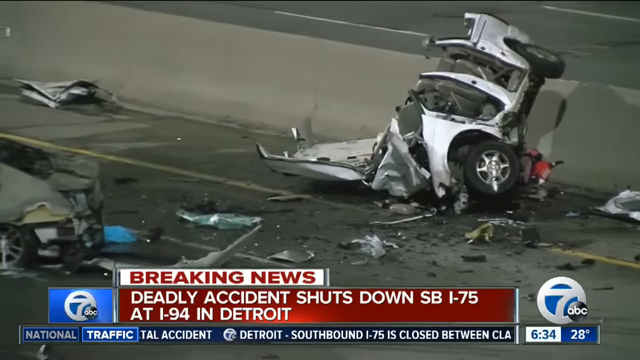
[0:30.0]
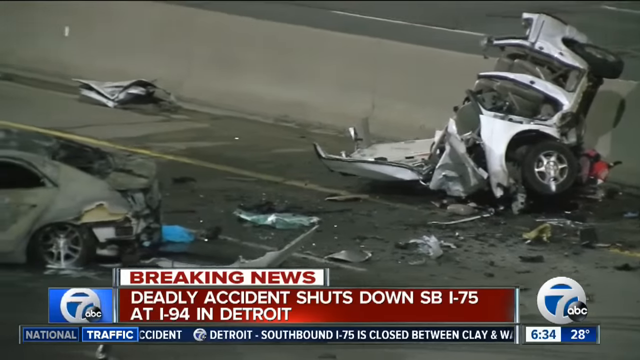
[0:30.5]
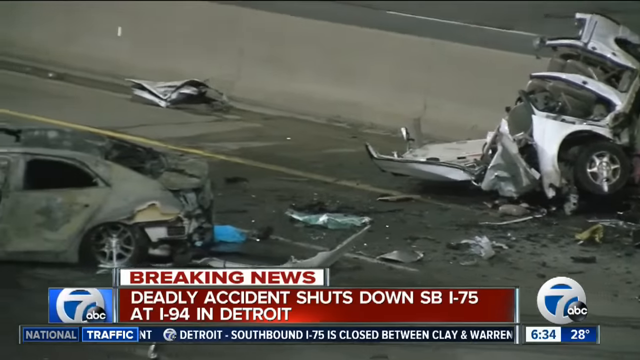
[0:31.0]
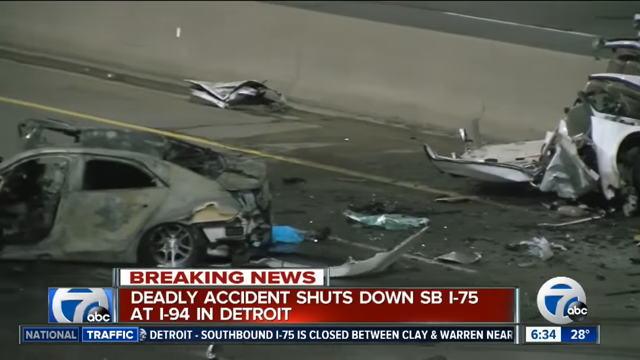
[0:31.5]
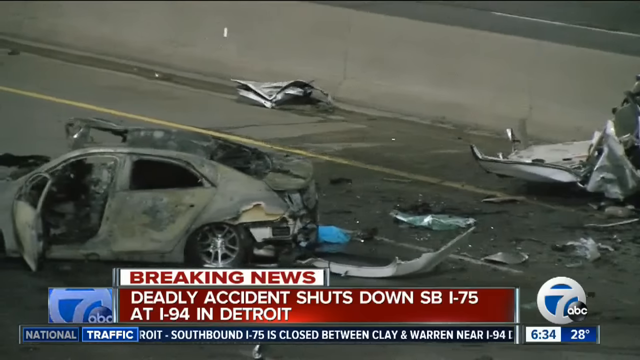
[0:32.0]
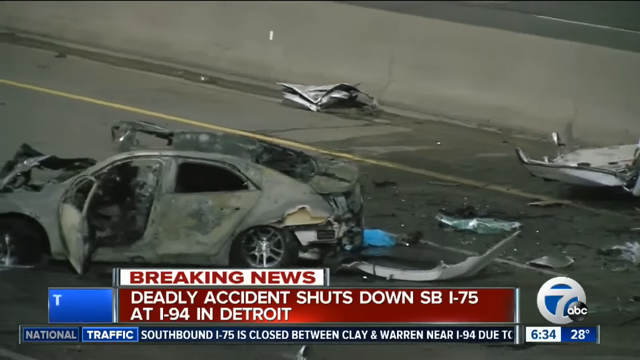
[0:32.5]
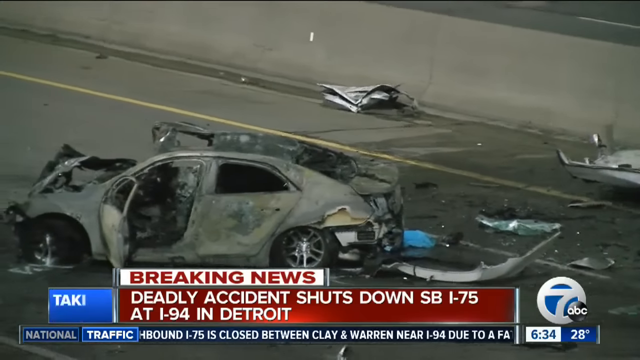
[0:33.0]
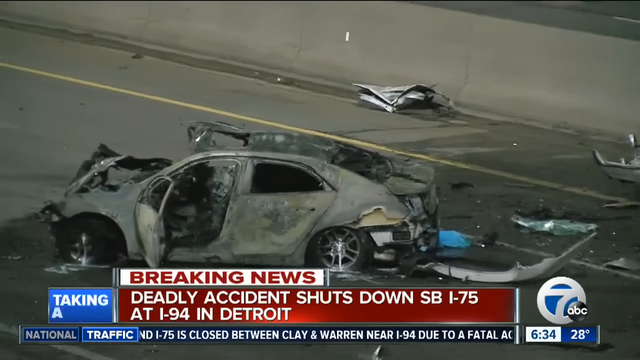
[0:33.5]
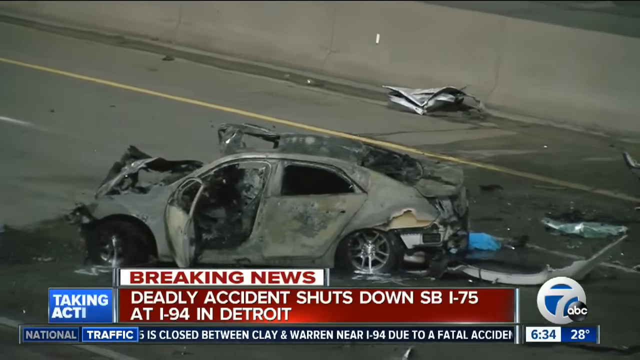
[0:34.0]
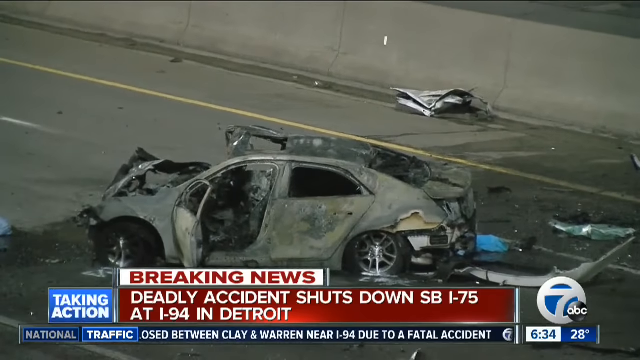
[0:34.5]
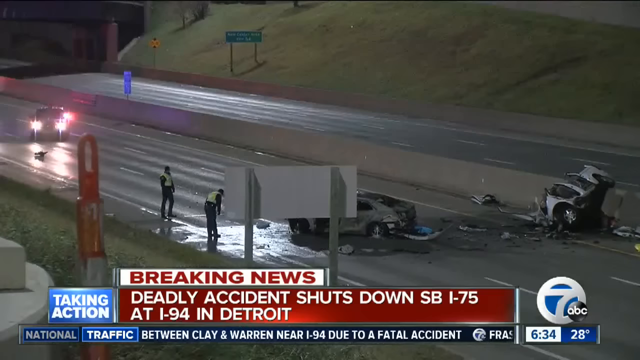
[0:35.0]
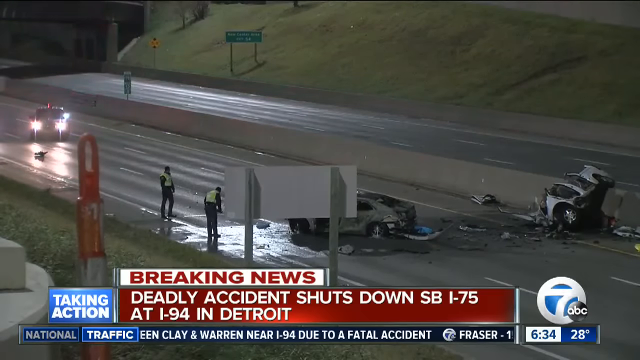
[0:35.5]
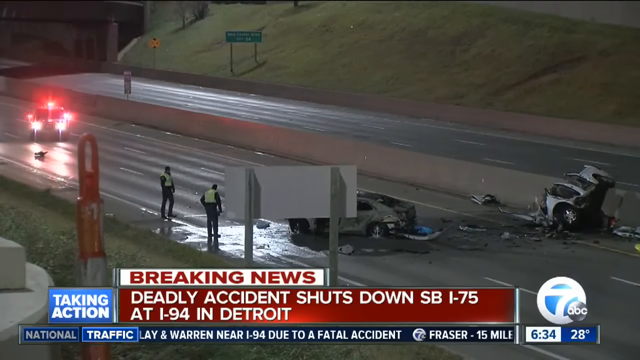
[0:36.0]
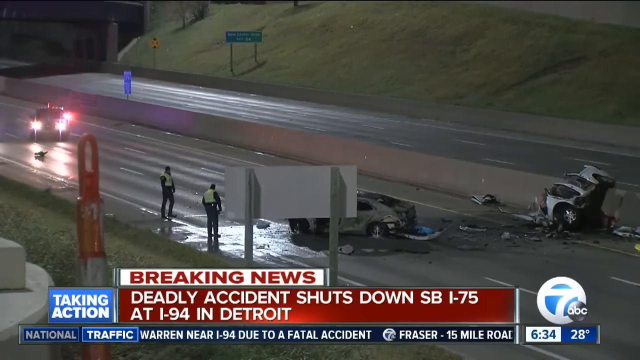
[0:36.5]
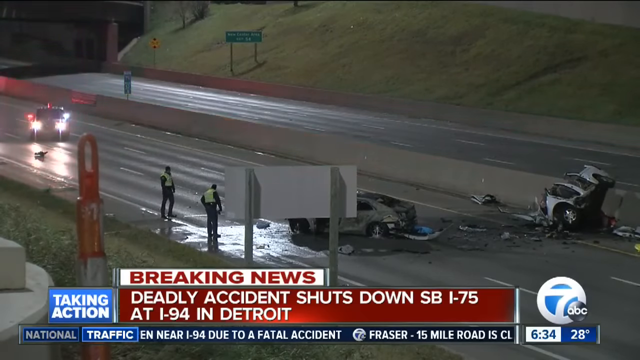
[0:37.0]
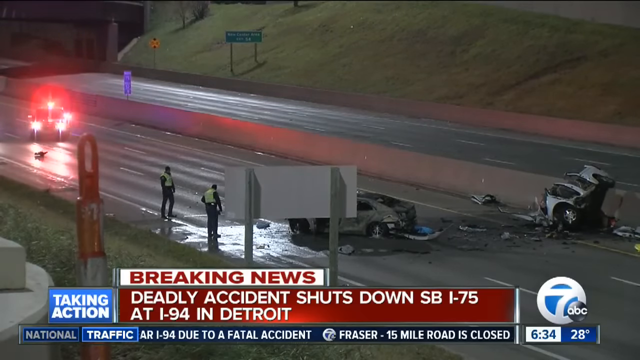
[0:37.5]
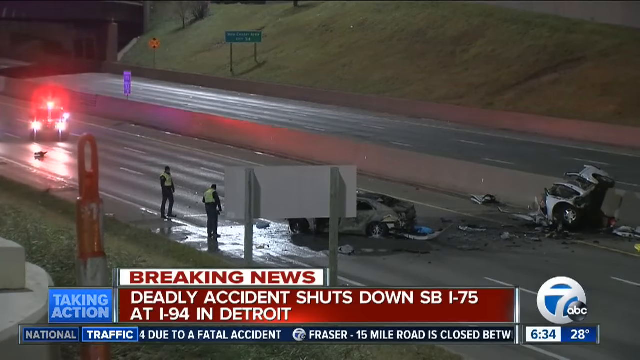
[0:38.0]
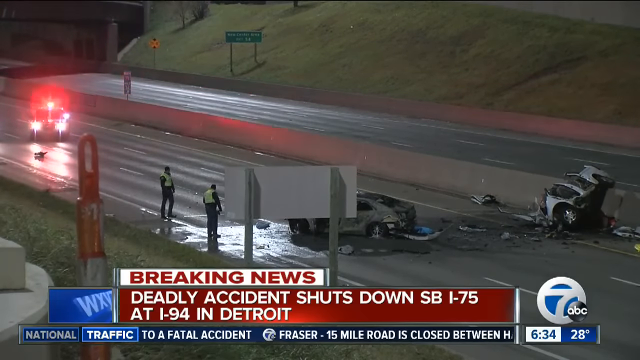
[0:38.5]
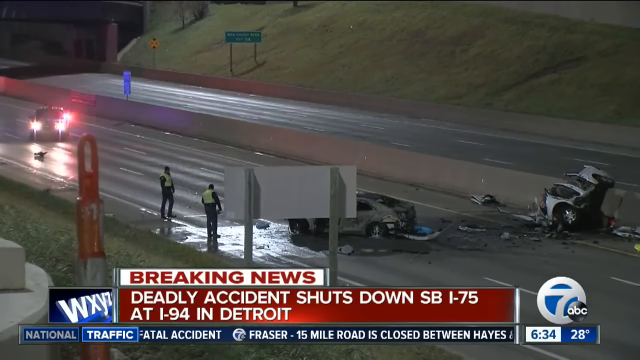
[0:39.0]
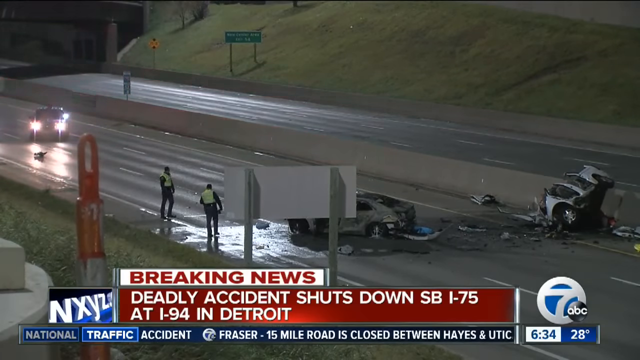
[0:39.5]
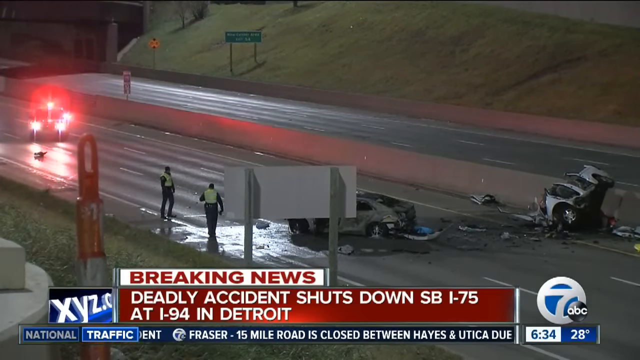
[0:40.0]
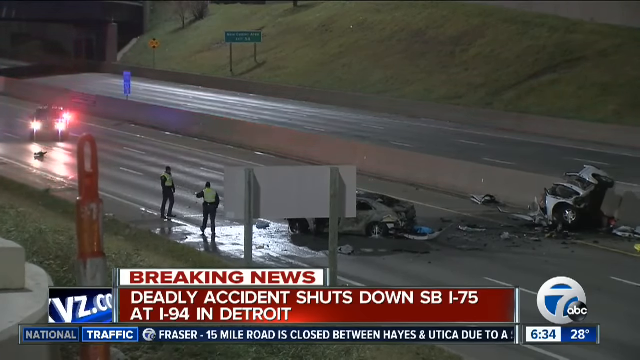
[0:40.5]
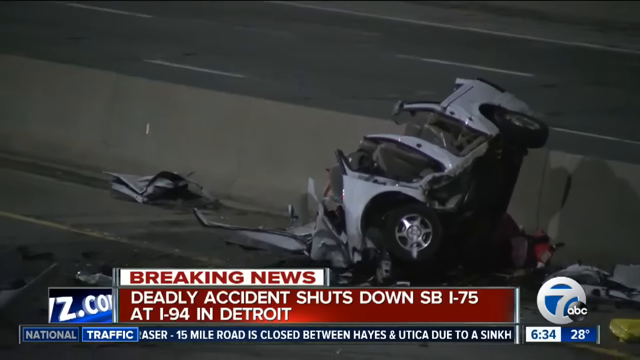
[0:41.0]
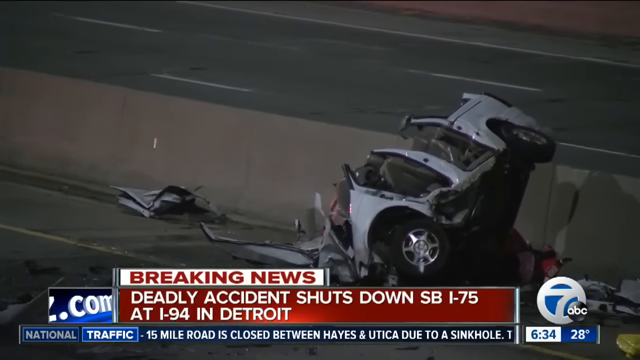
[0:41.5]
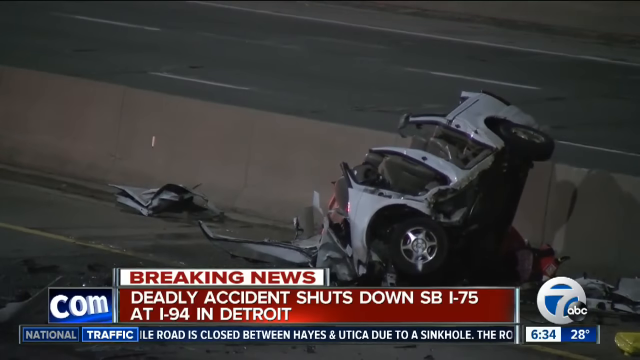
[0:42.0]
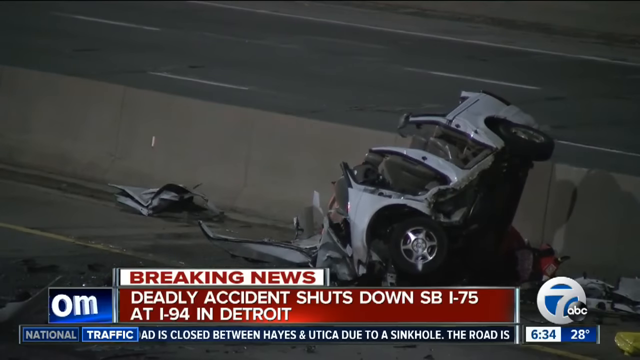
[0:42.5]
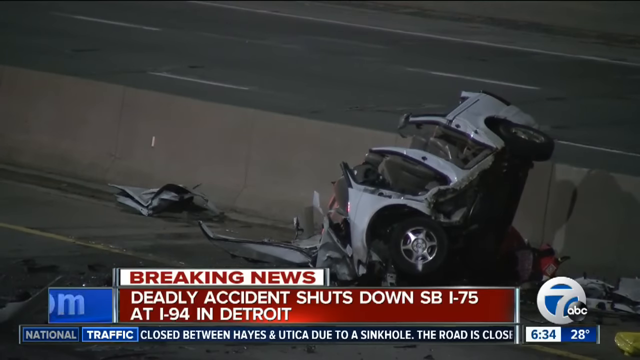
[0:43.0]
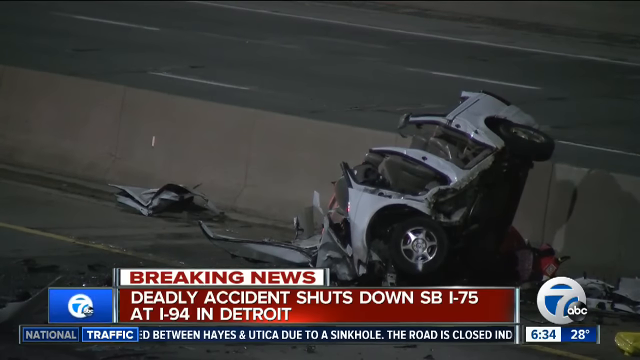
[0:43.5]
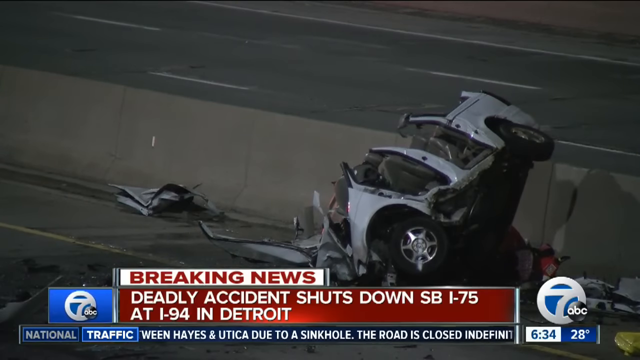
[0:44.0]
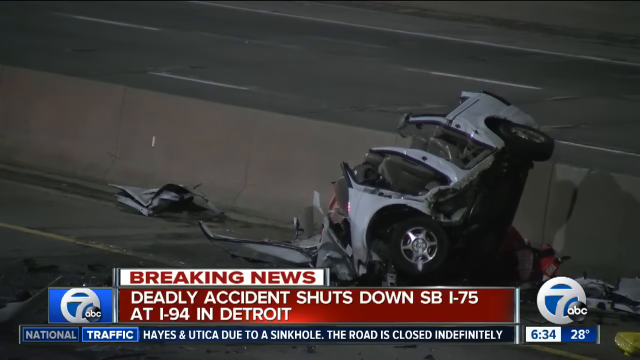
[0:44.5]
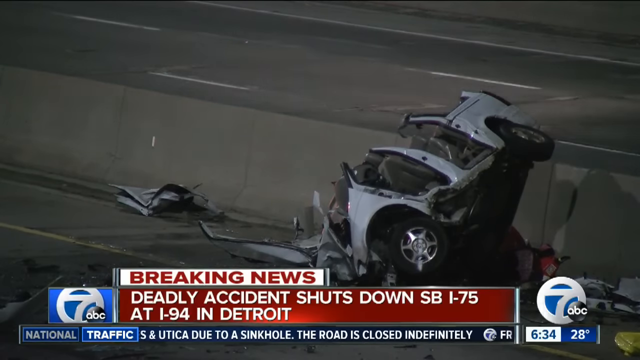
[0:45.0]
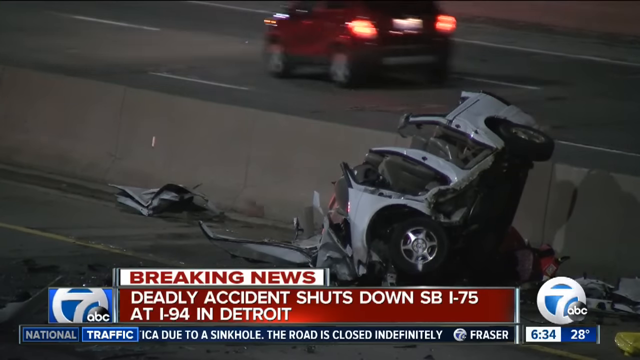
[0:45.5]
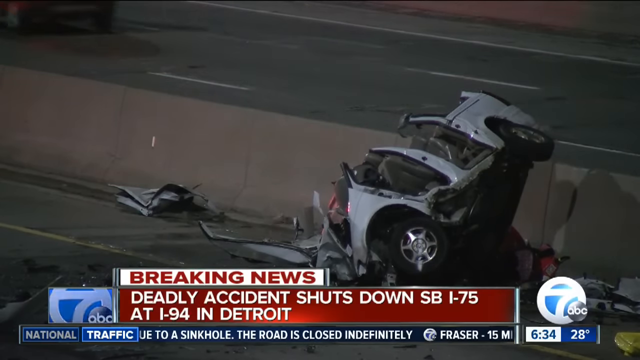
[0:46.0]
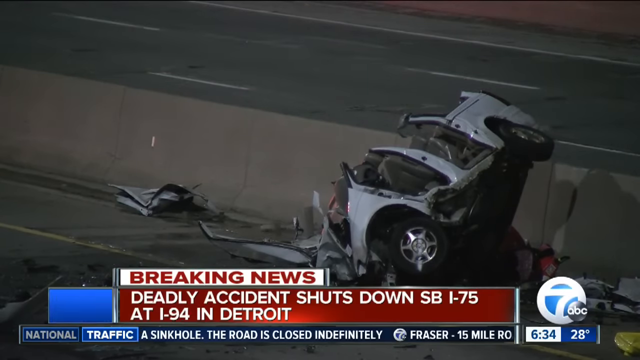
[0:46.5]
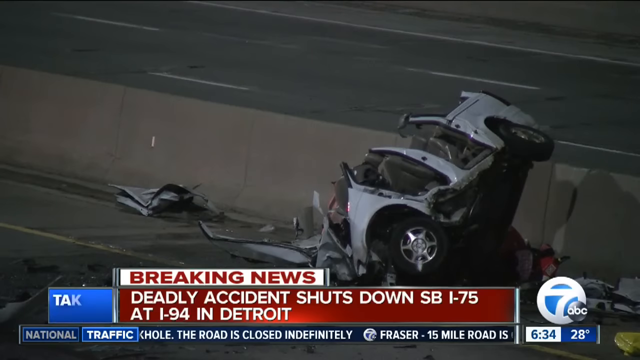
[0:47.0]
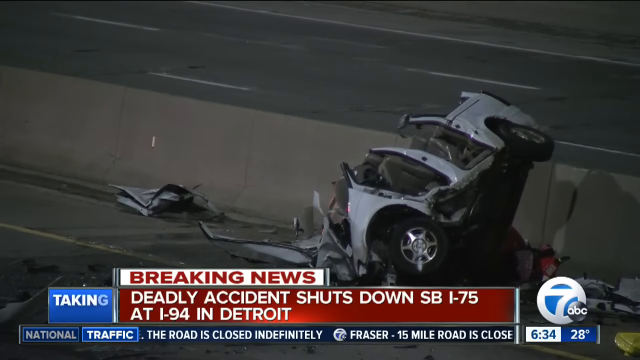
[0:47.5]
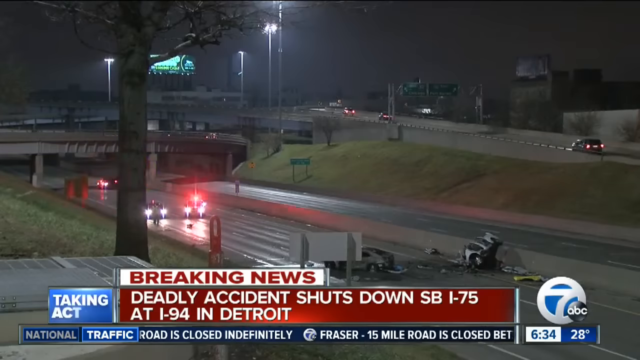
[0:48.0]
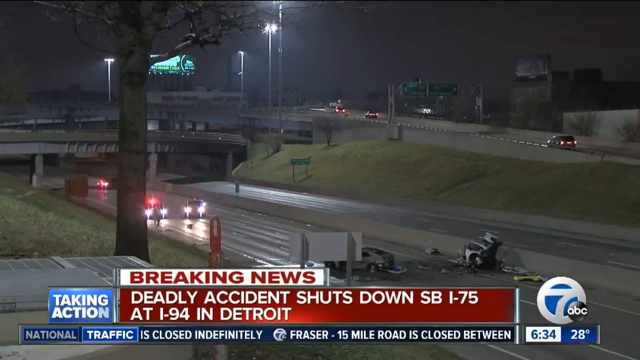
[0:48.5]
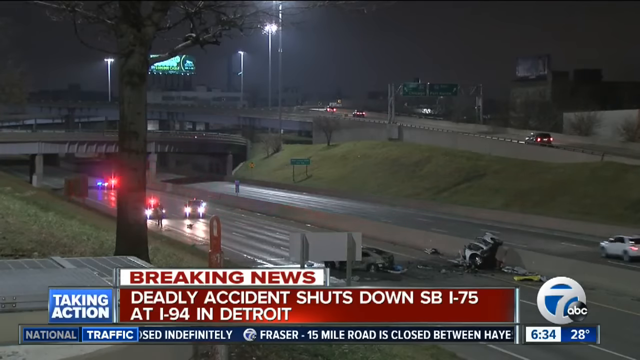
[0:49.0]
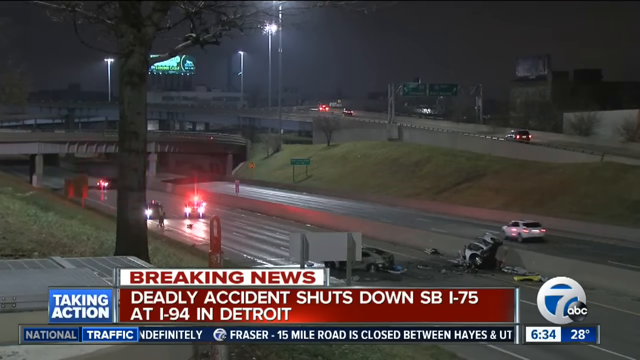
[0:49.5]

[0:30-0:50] Pictures of the car involved in the accident are shown; its parts are broken into pieces and it seems to be burned. Two people wearing green bibs look at the spot where the accident happened. A police car has come to investigate. One car flashes red, green and blue lights, apparently to warn oncoming cars that there is an accident.